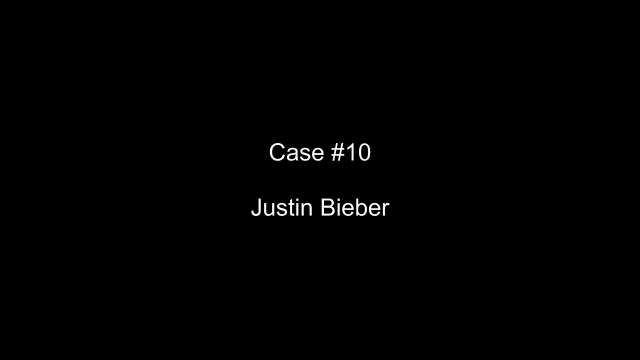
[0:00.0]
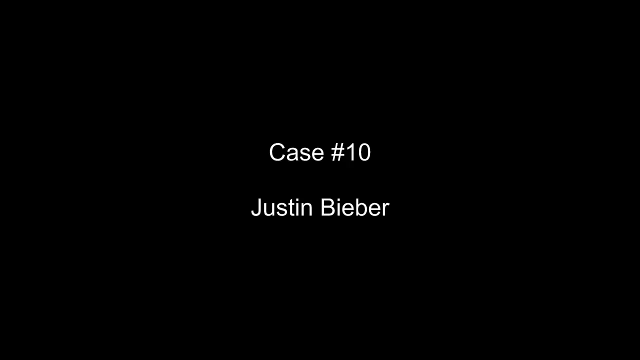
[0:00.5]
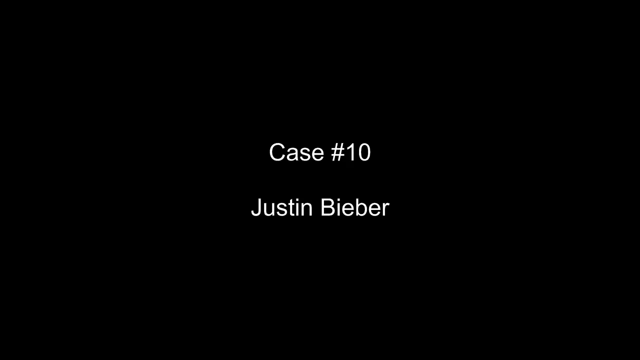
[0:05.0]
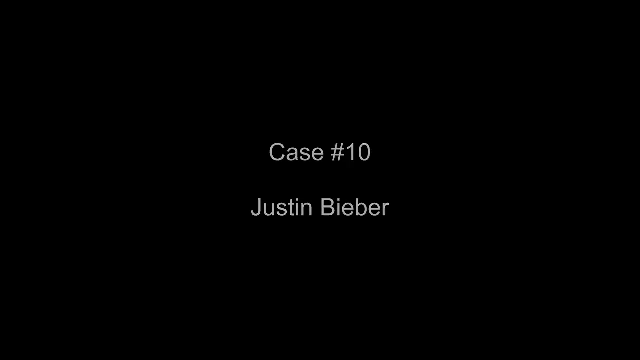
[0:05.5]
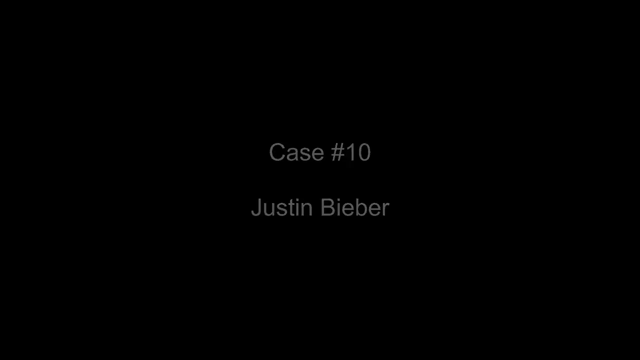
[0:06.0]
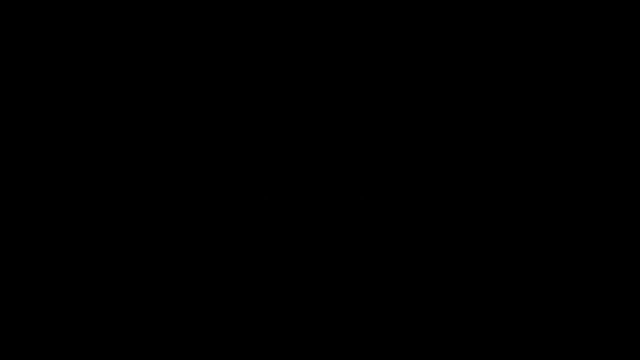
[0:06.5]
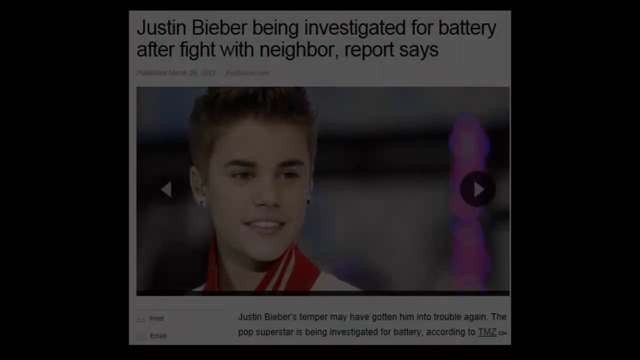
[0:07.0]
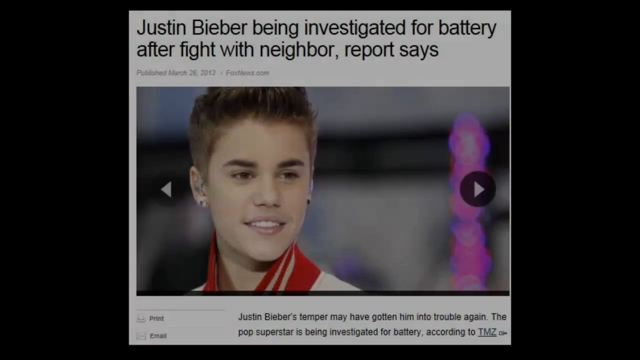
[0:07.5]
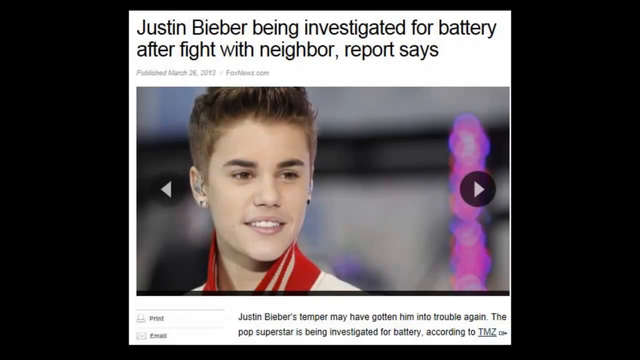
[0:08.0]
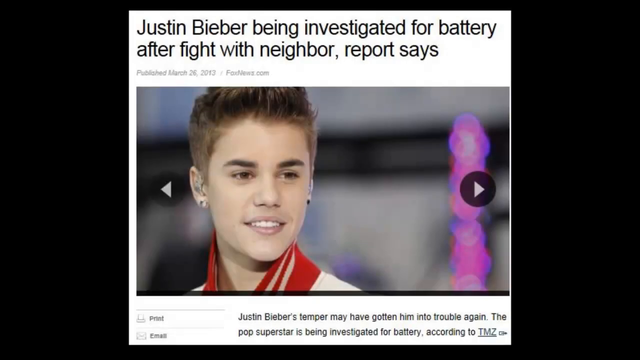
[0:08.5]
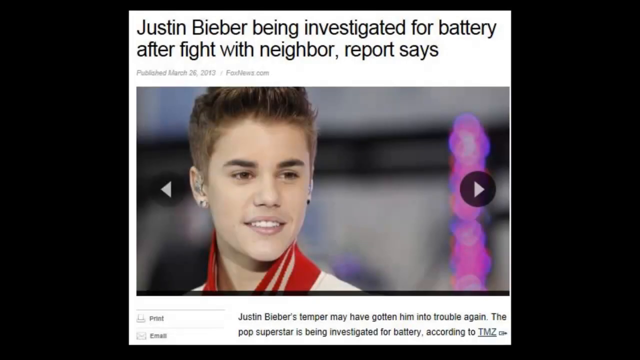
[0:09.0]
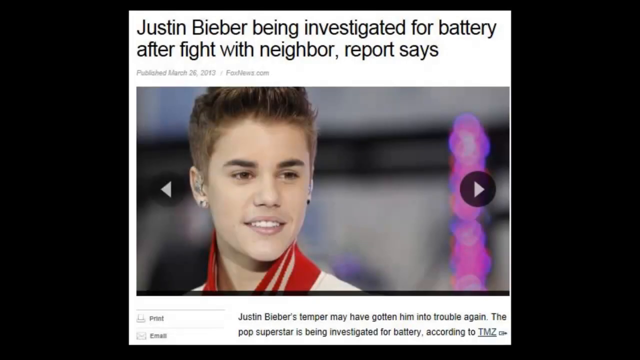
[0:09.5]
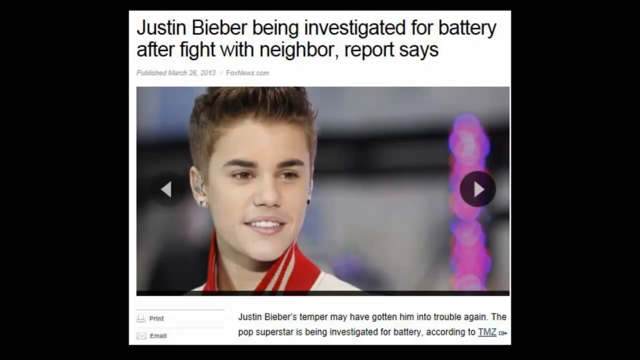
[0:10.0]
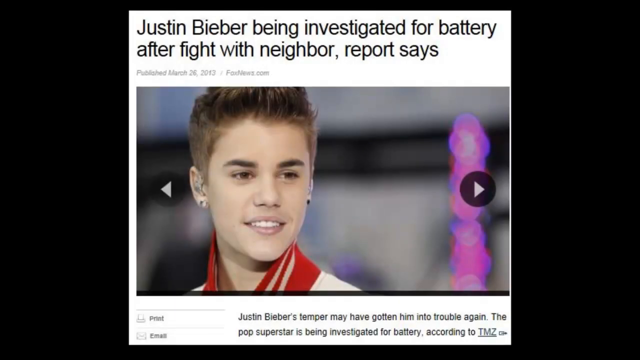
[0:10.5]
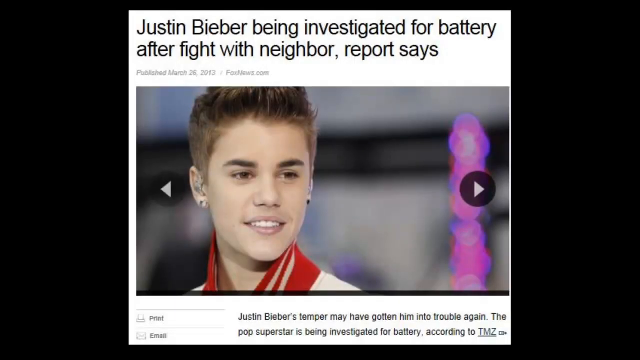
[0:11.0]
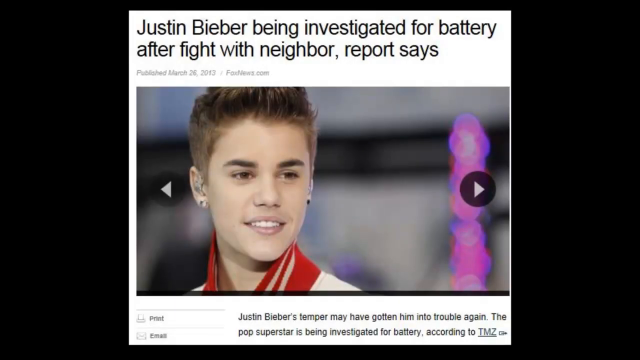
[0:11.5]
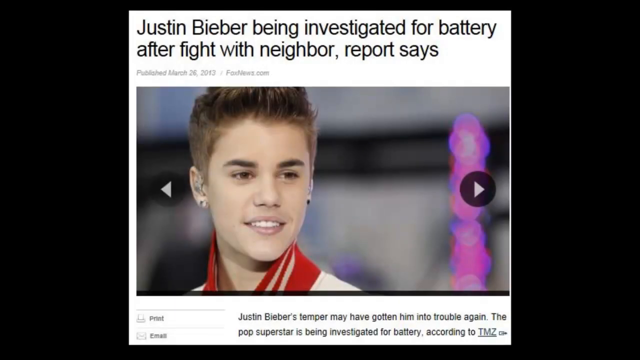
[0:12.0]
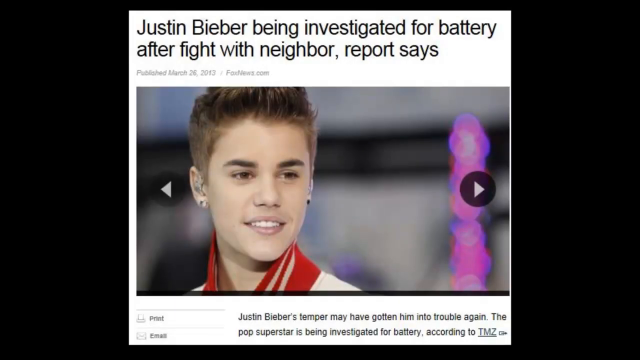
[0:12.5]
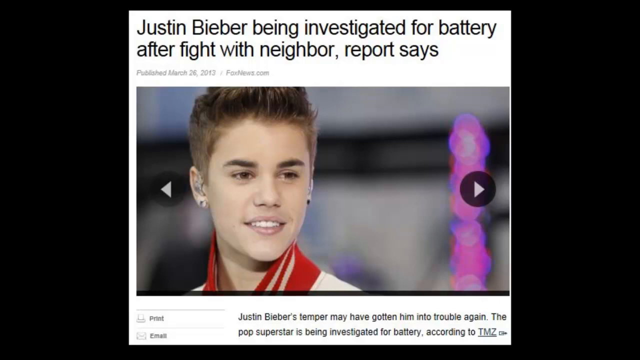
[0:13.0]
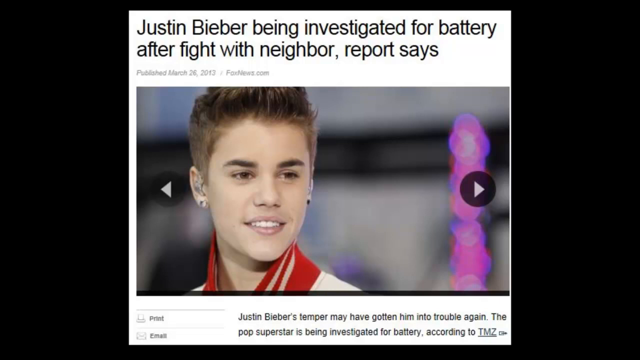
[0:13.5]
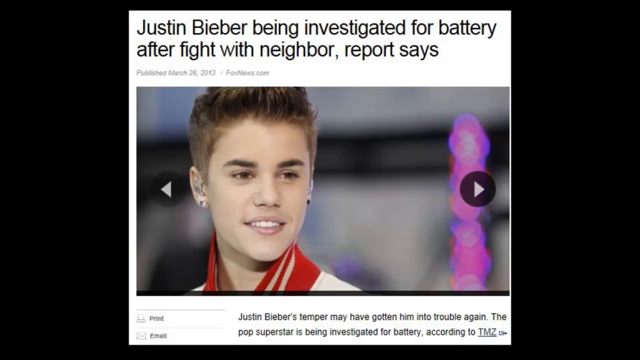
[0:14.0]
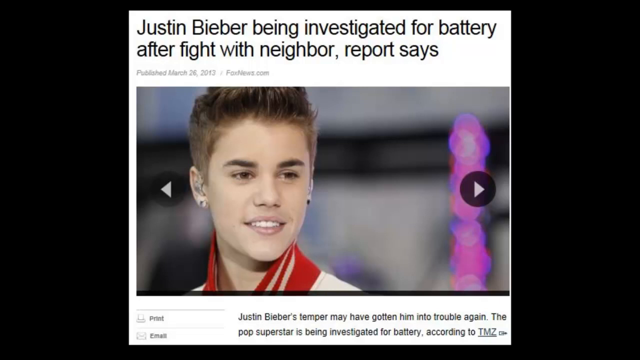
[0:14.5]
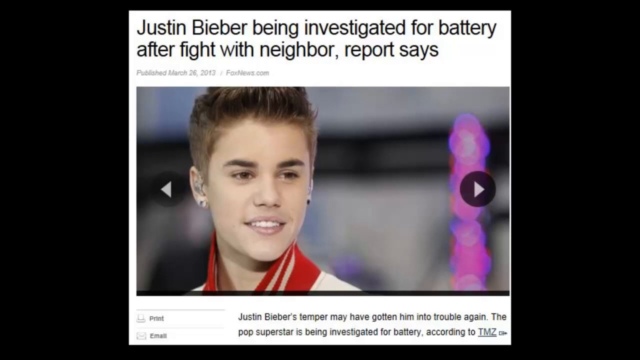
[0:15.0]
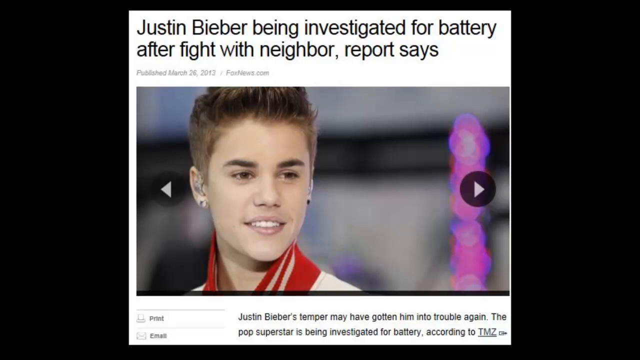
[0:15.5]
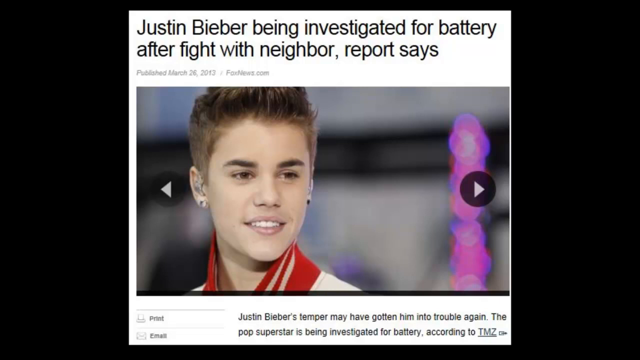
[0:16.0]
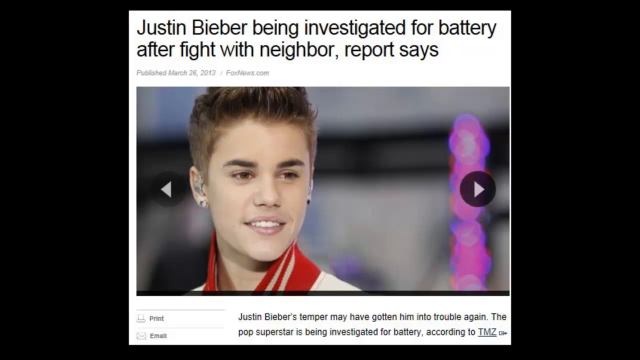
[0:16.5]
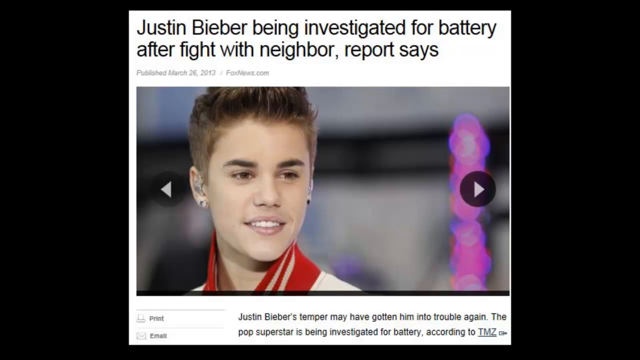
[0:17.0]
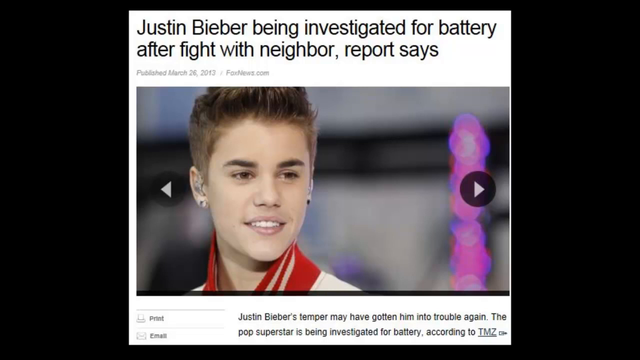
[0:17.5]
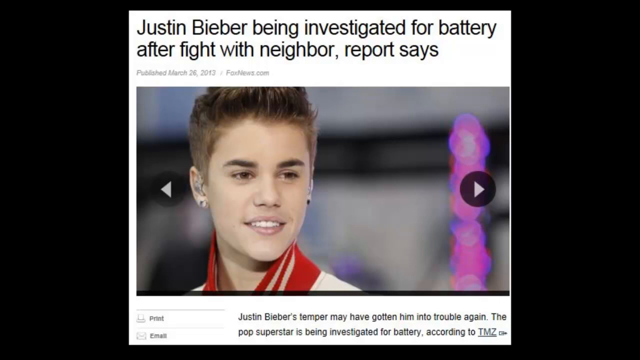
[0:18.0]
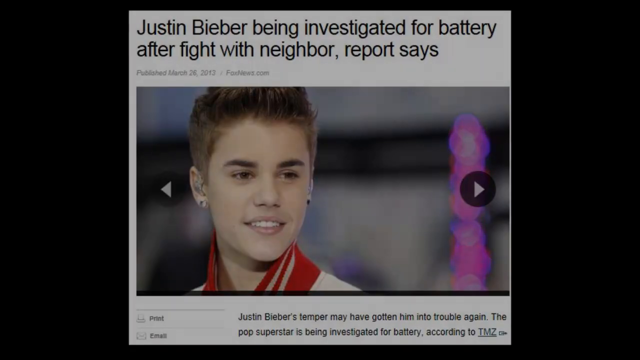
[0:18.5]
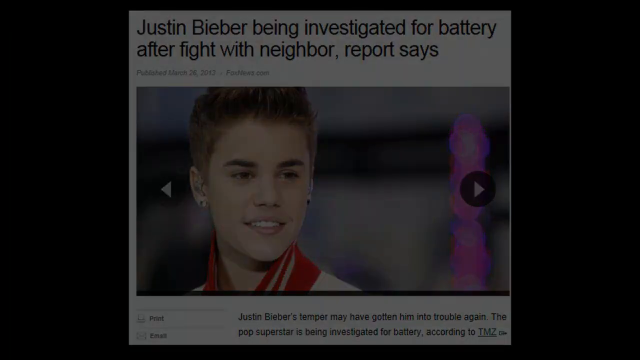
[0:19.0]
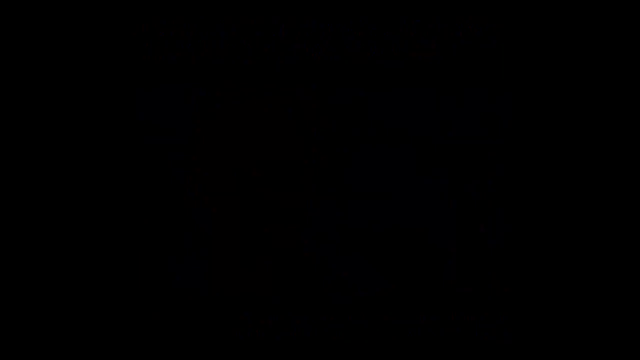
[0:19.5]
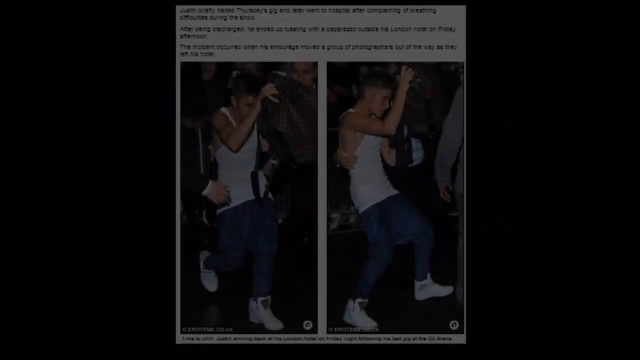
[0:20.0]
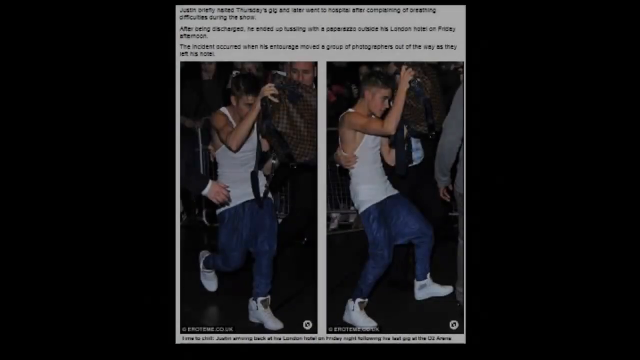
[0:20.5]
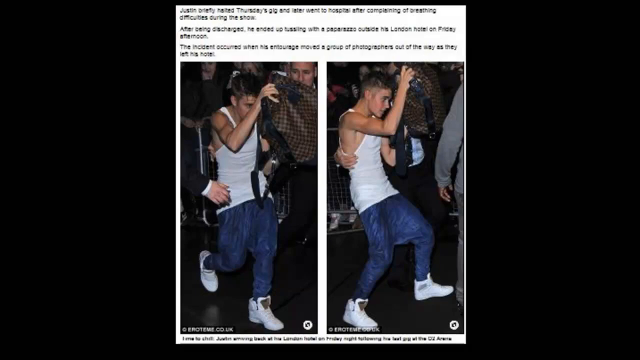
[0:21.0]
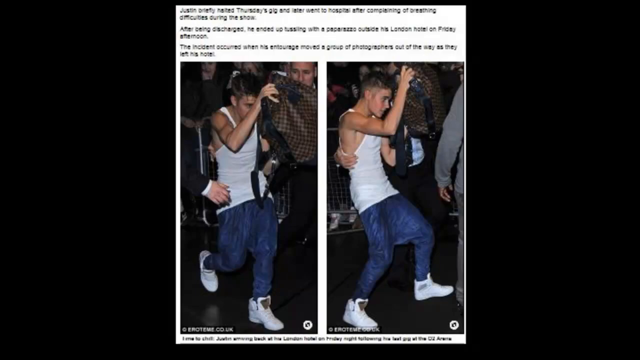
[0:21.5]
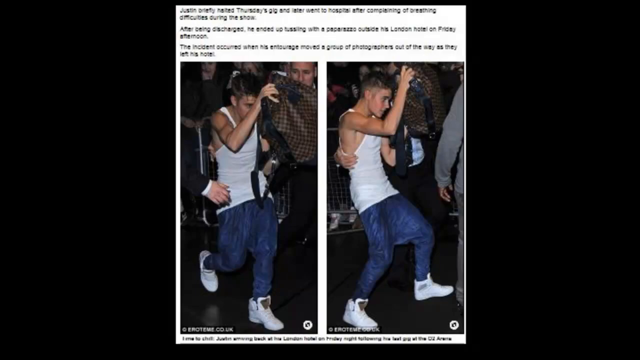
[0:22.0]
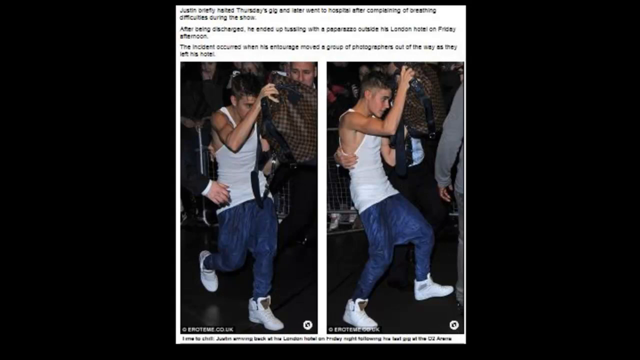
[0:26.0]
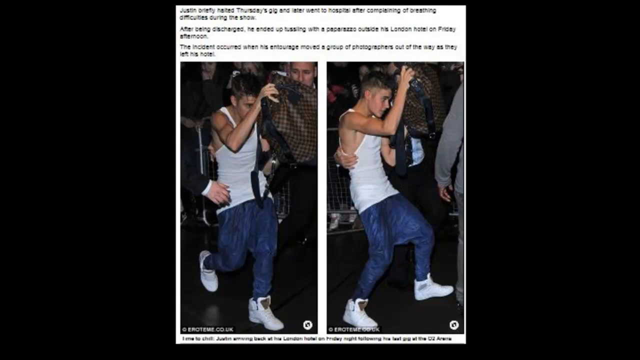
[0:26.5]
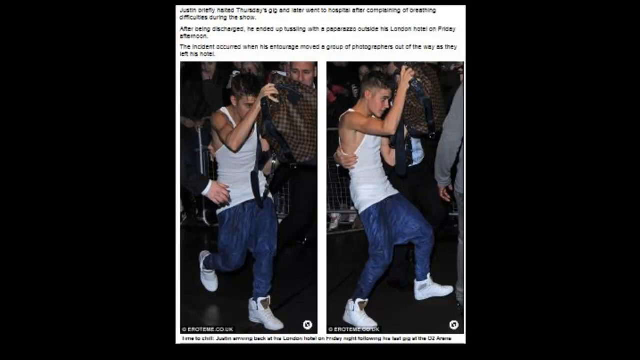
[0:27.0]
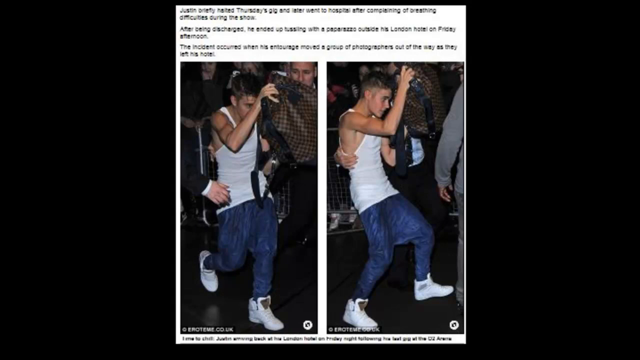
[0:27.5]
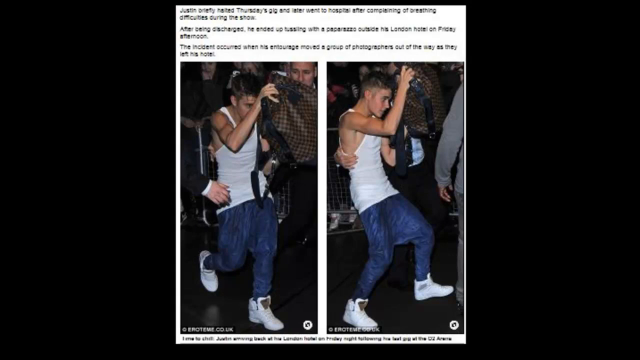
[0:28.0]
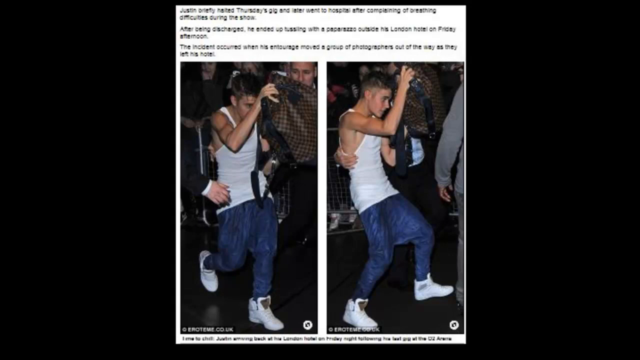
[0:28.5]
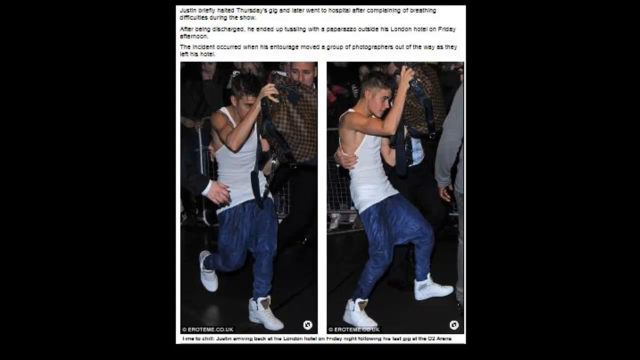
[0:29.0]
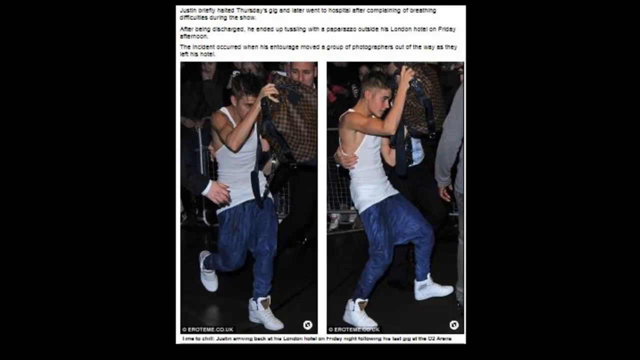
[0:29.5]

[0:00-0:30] The segment is labeled case 10, Justin Bieber, and the text says "Justin Bieber investigated for battery after fighting his neighbor." A picture of Justin Bieber is shown; he looks very young in the image and is wearing jeans.